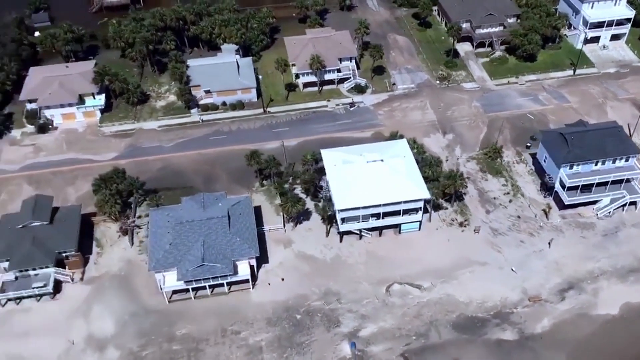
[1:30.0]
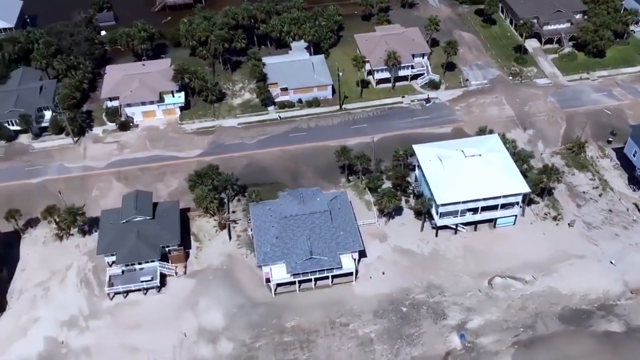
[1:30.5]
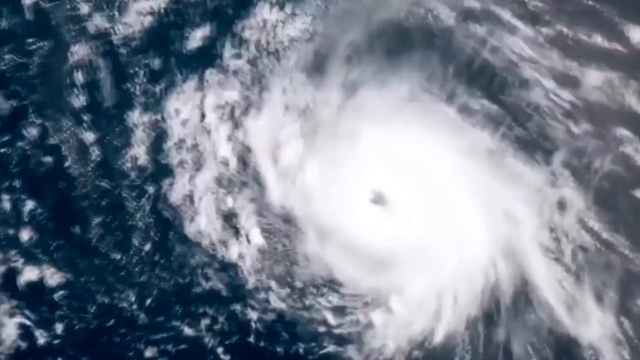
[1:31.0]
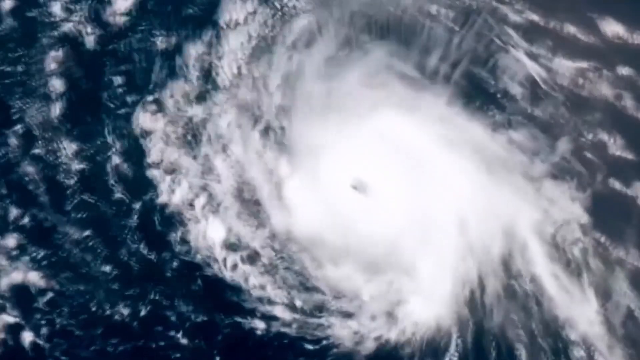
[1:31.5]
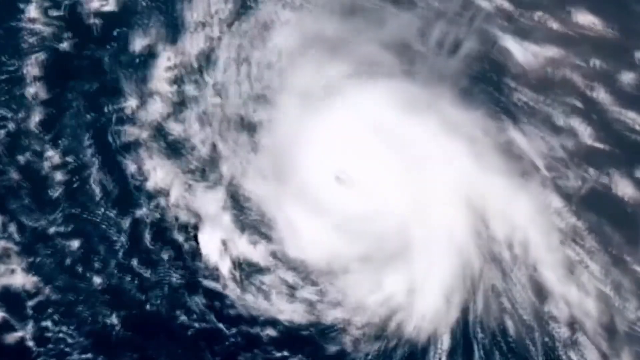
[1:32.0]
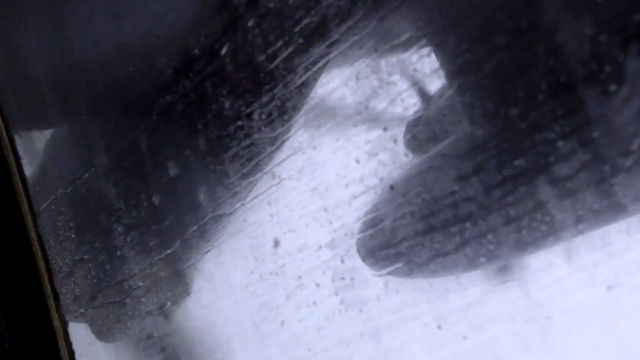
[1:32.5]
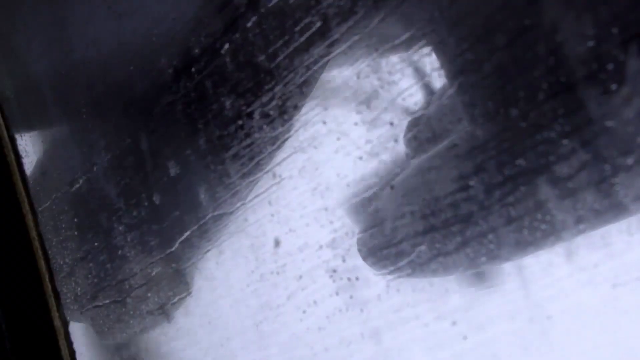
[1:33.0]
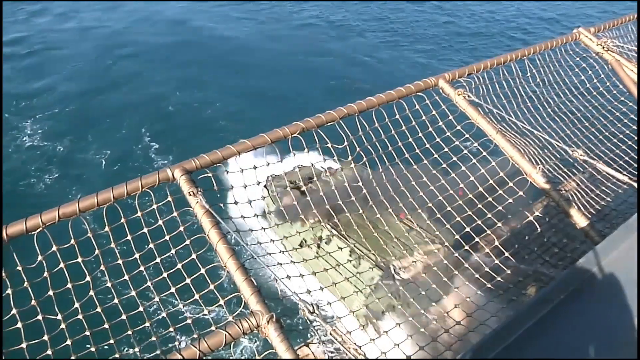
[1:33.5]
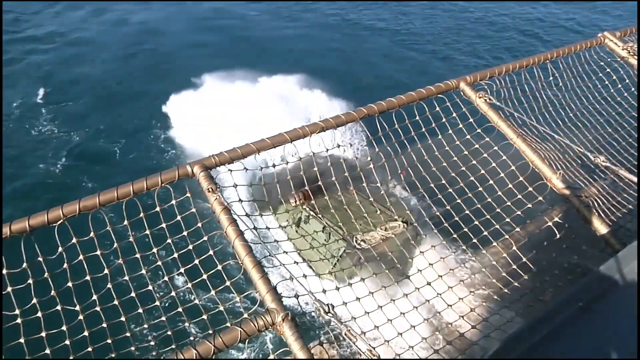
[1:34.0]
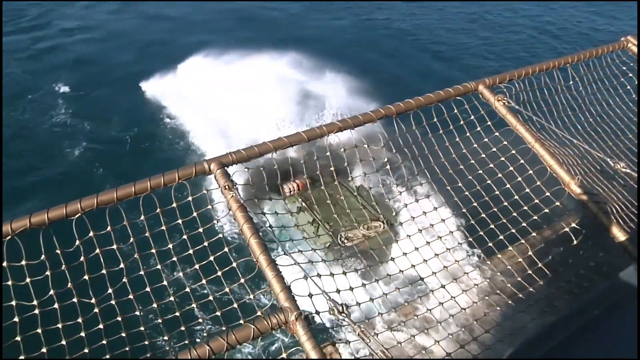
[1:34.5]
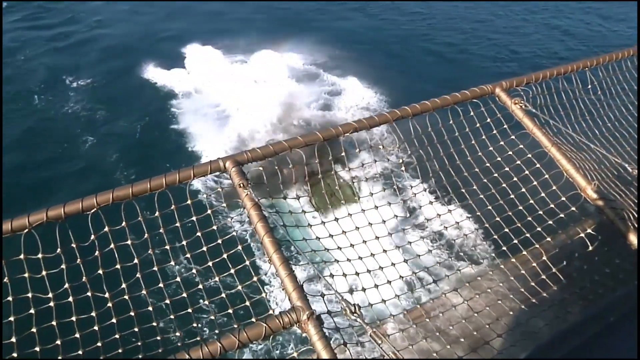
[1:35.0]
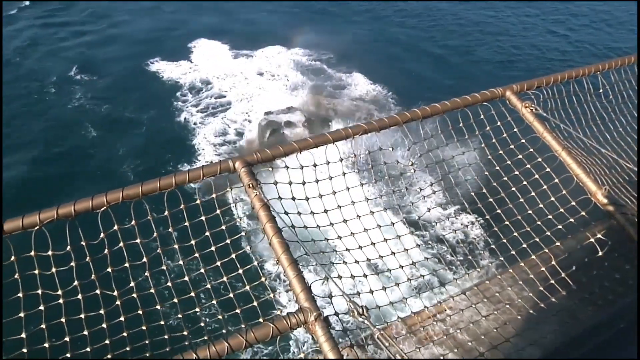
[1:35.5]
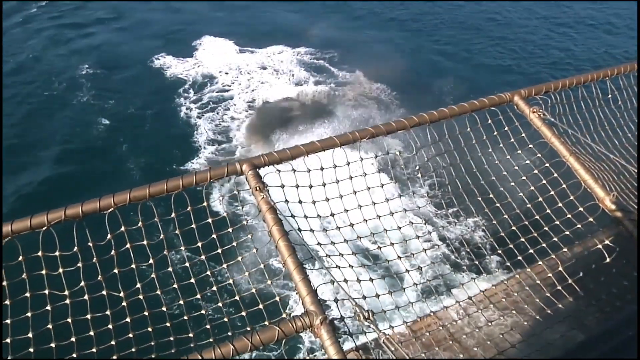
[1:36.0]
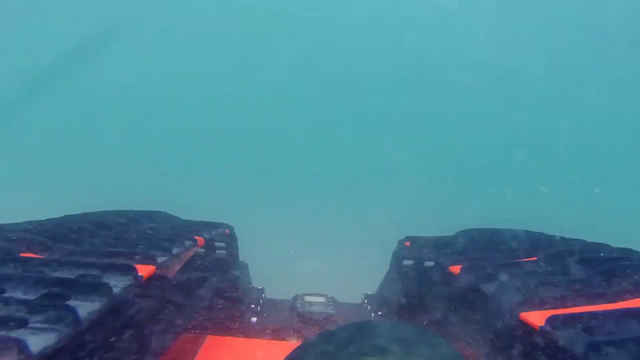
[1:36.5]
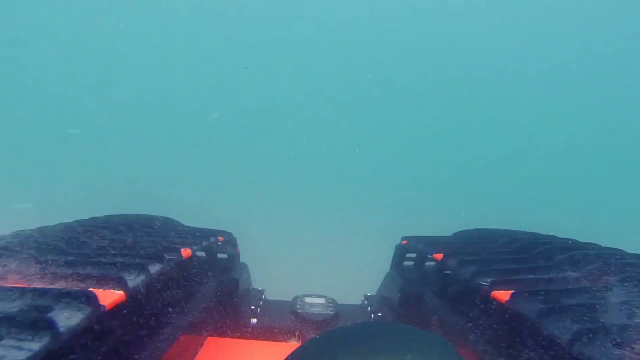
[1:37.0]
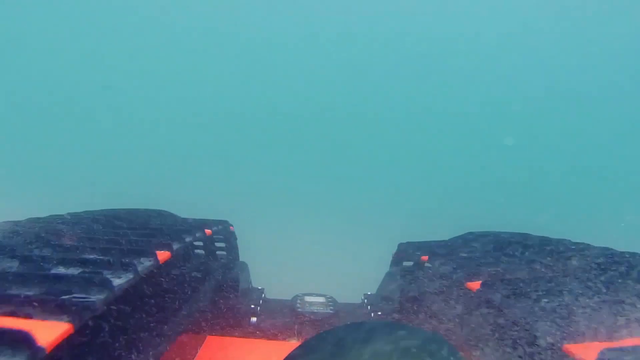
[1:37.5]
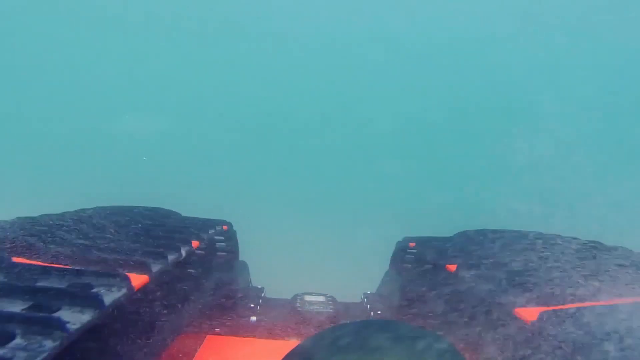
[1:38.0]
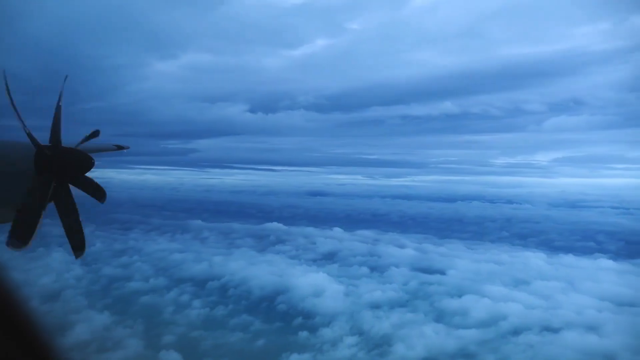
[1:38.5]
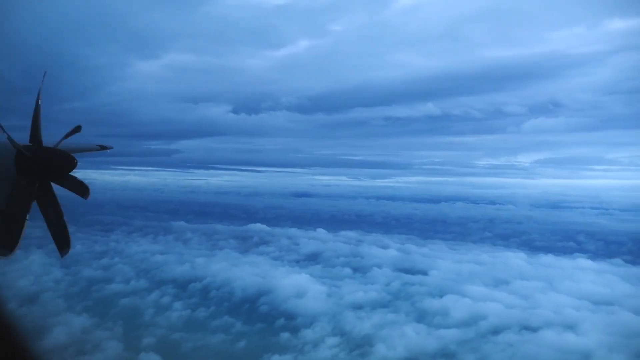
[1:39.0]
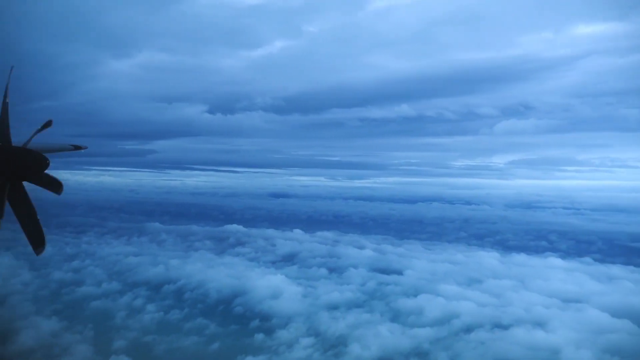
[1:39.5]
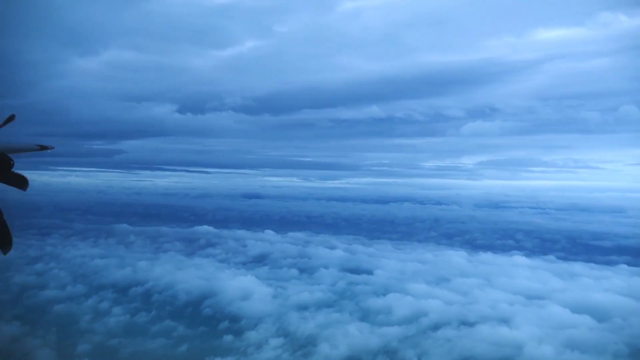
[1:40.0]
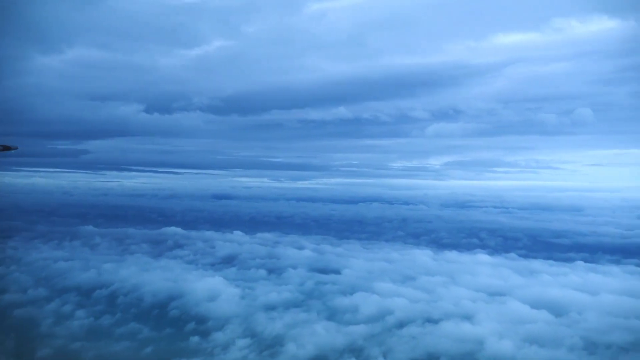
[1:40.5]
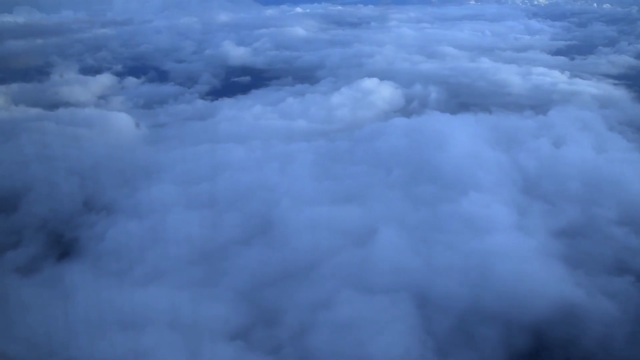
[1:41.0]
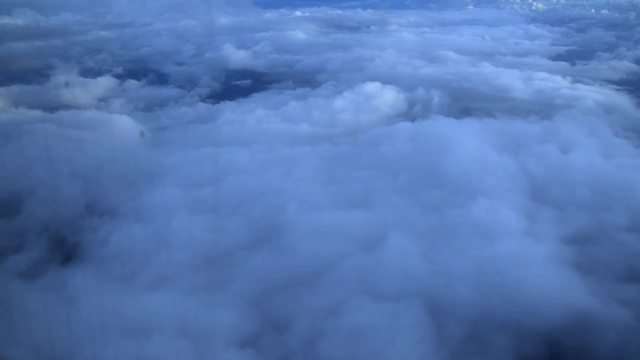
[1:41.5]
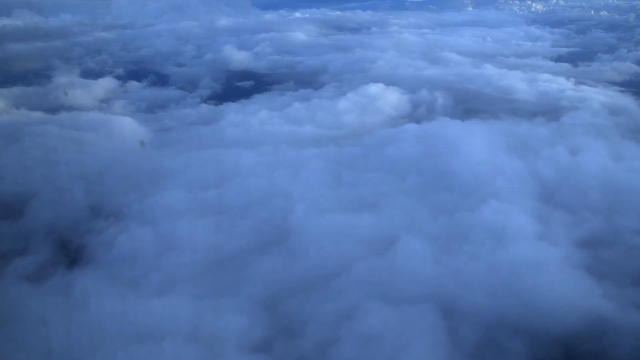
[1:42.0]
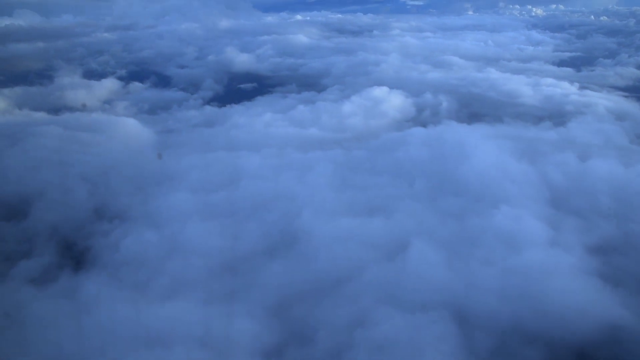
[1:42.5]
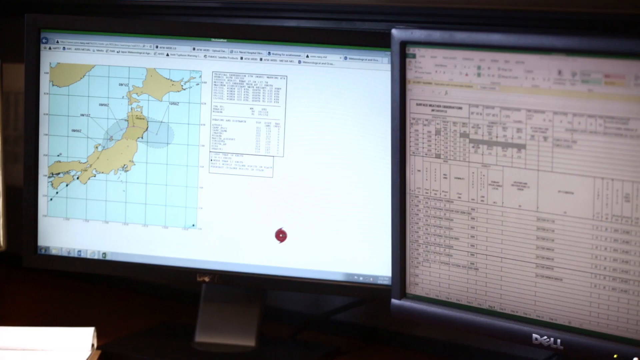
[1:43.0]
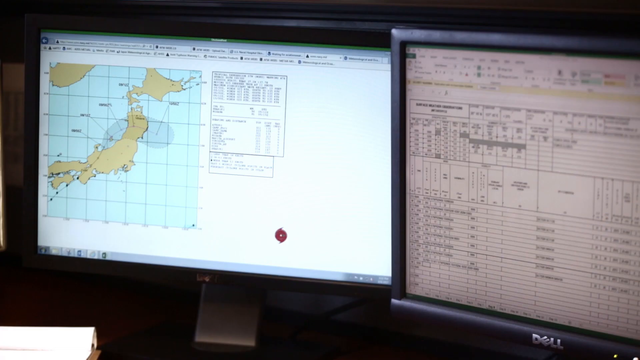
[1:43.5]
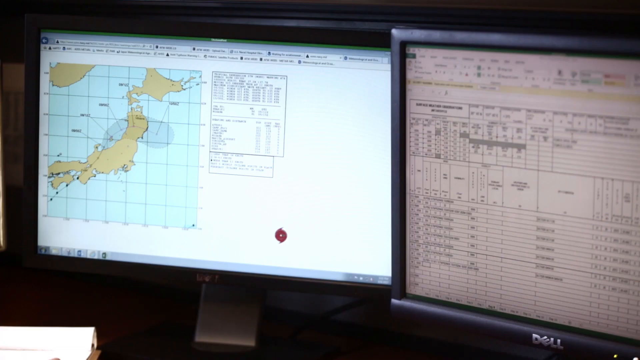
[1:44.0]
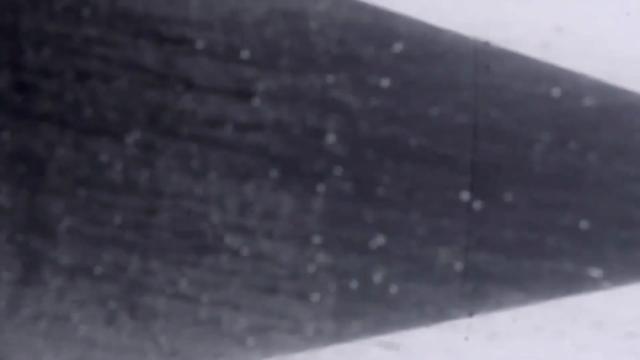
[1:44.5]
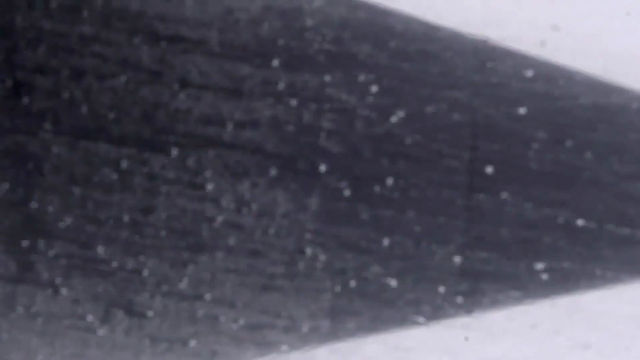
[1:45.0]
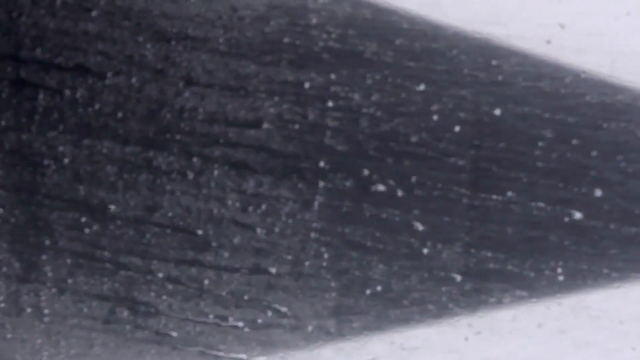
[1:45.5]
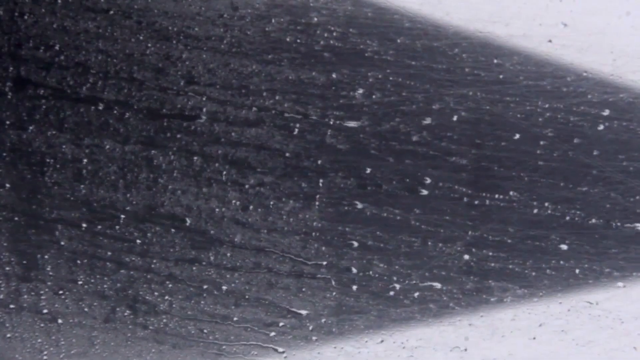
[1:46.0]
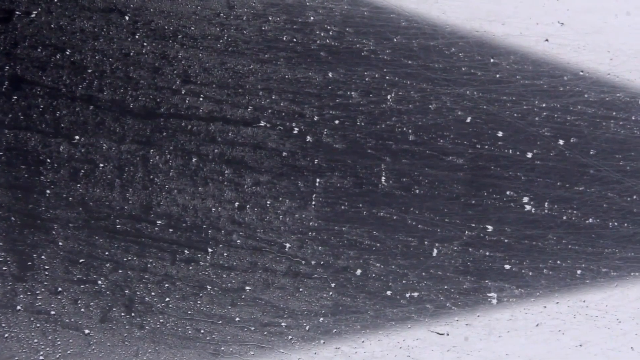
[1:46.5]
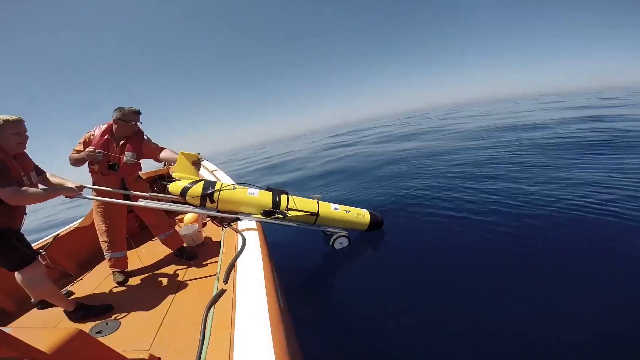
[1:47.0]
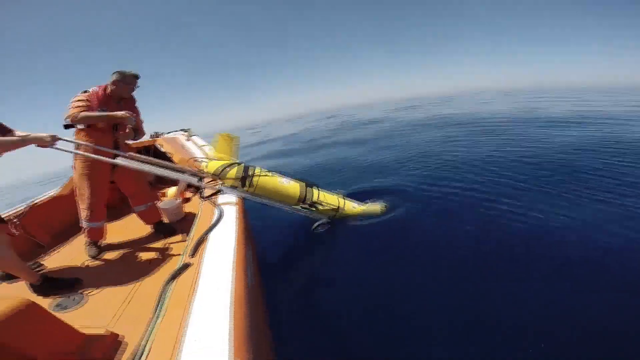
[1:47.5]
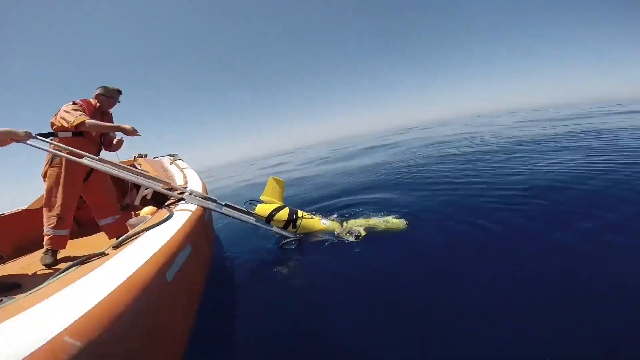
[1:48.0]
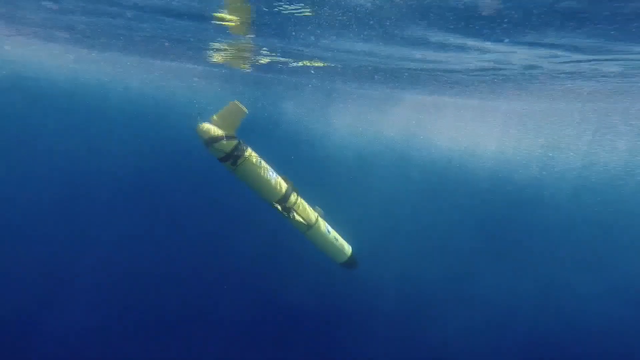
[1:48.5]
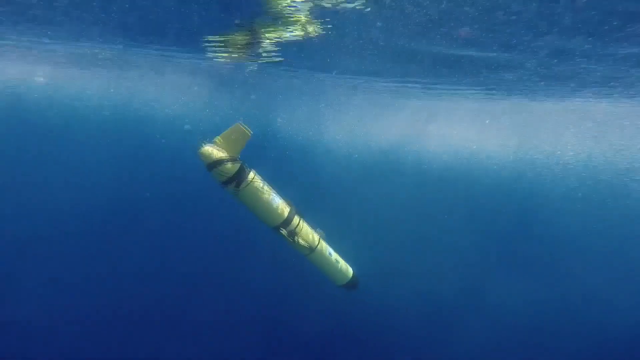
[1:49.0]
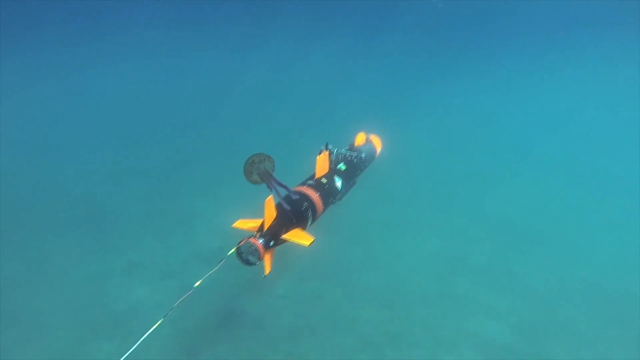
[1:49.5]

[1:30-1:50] What appears to be a hurricane pattern is shown. Some sort of military device goes into the water with a big splash, with netting above it, and a shot follows it underwater, where it can be seen to have wheels. The view then looks out the window of a jet at many clouds in the sky. More computer footage follows, including an image of Japan on a screen, then a glass window covered in rain condensation, and then the houses appear again.